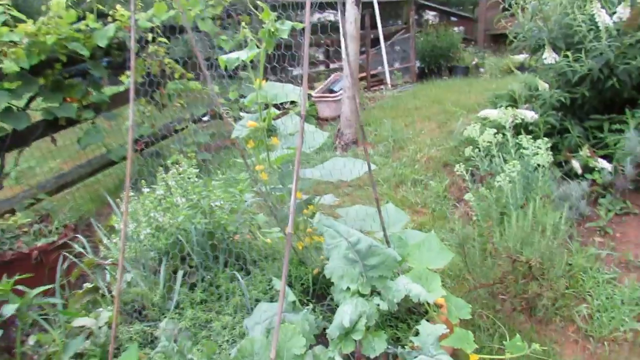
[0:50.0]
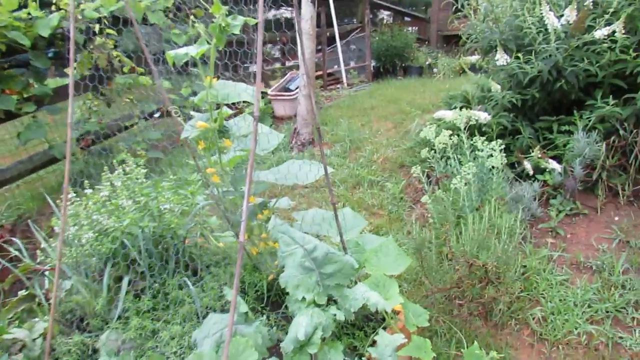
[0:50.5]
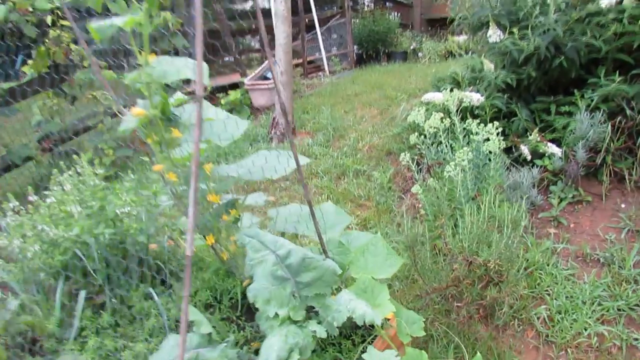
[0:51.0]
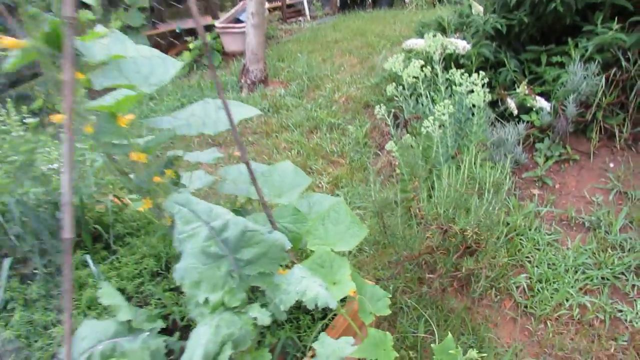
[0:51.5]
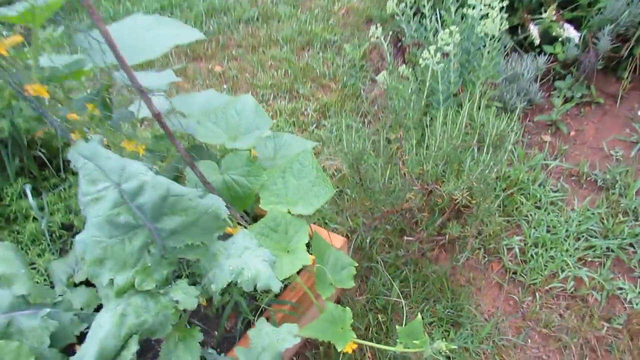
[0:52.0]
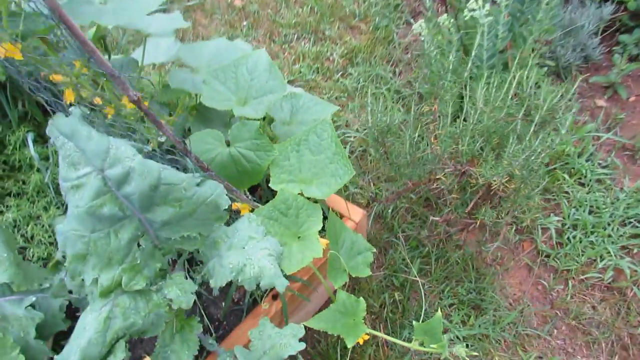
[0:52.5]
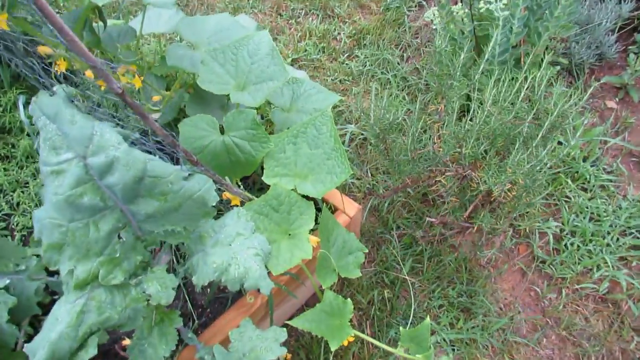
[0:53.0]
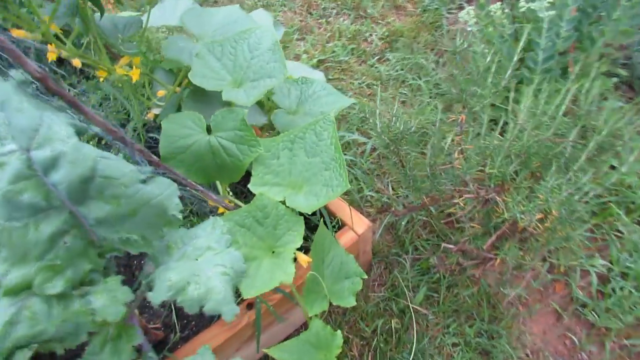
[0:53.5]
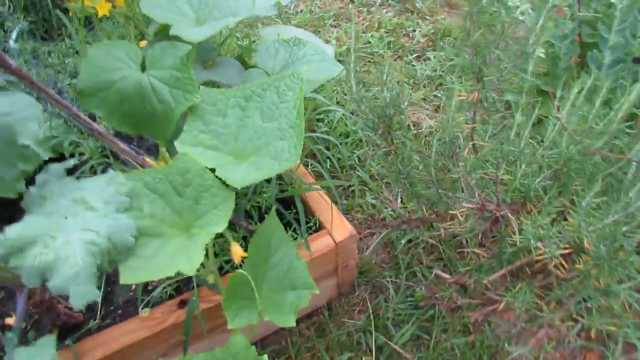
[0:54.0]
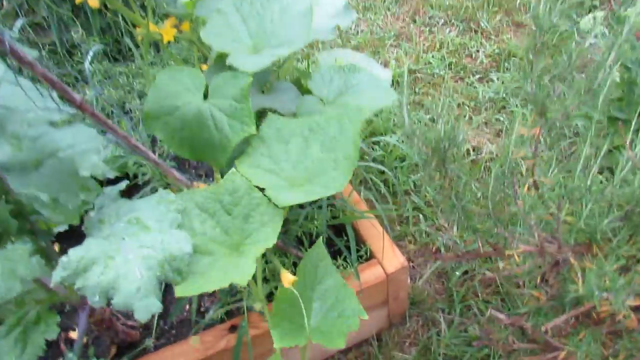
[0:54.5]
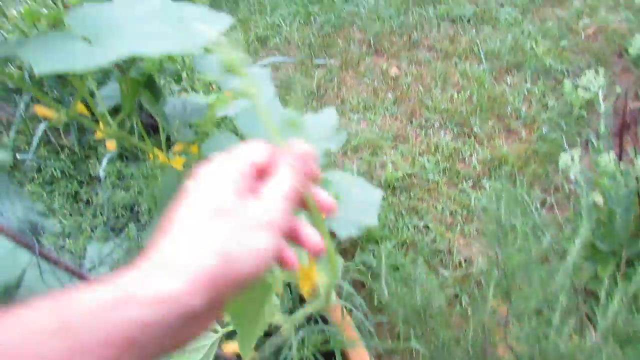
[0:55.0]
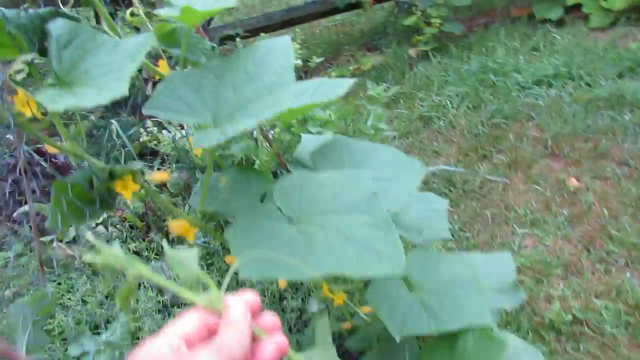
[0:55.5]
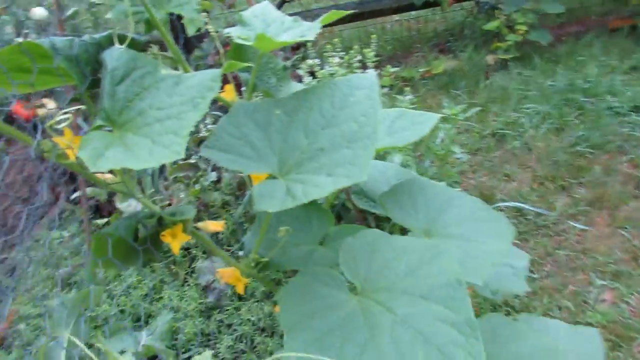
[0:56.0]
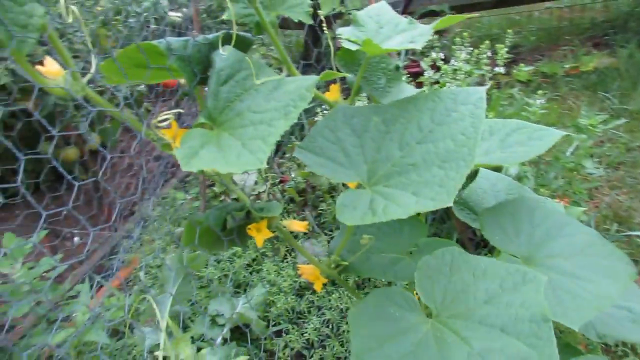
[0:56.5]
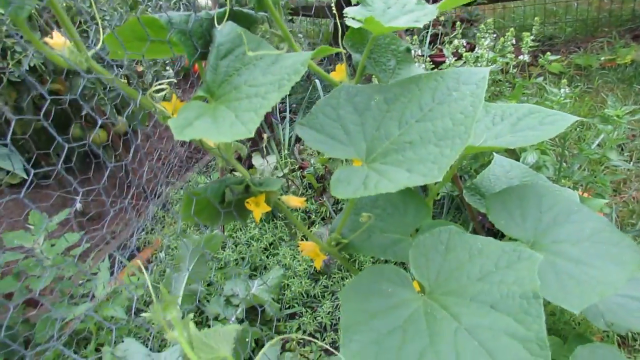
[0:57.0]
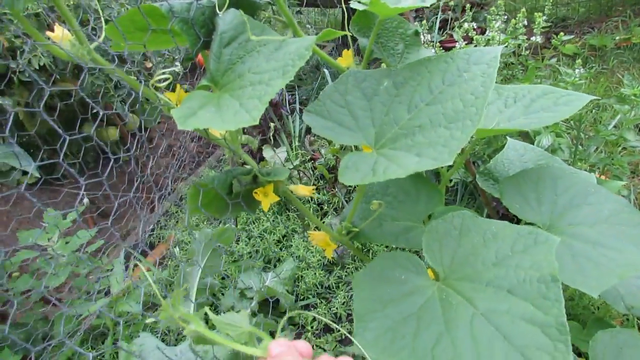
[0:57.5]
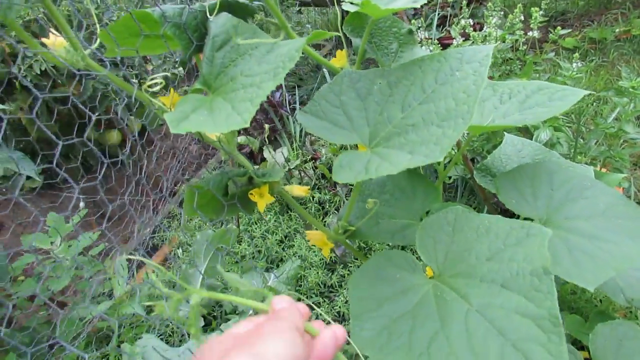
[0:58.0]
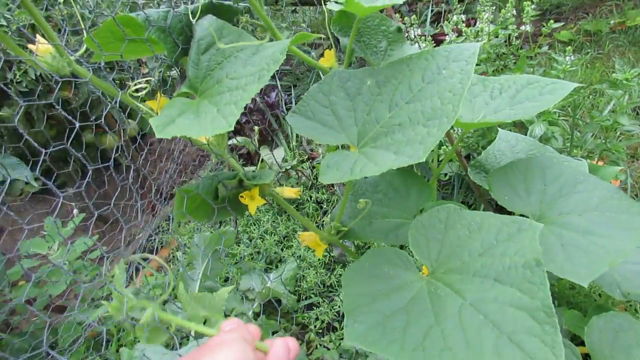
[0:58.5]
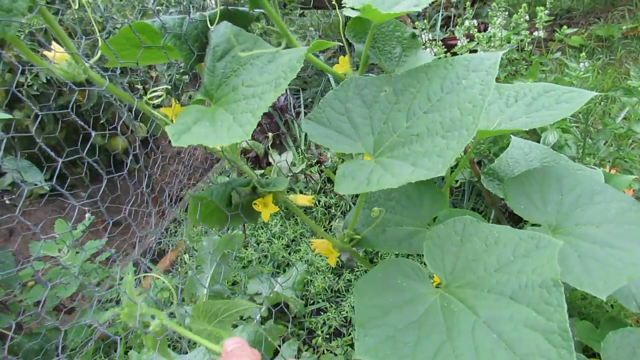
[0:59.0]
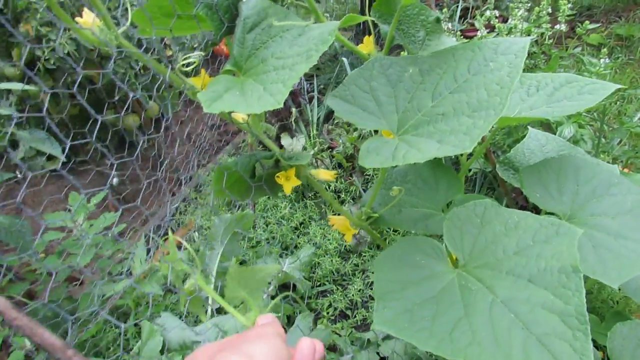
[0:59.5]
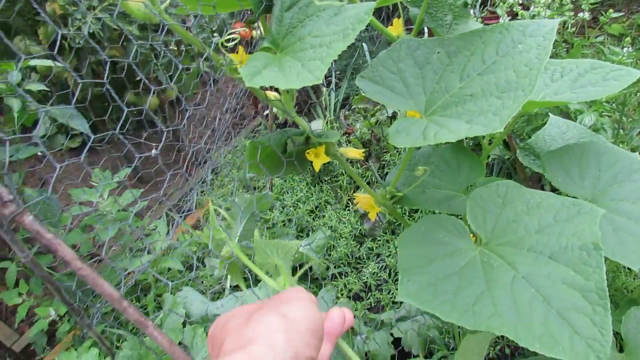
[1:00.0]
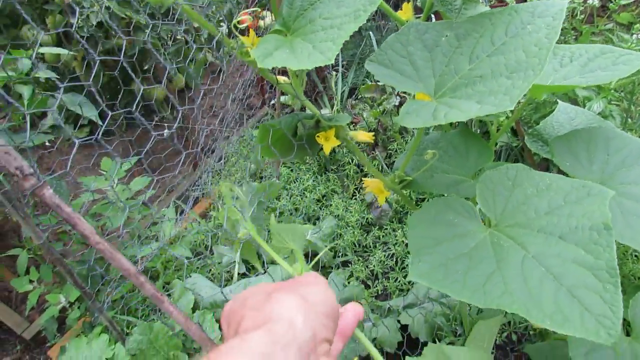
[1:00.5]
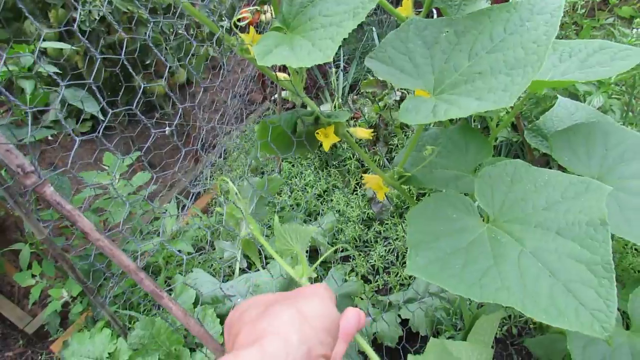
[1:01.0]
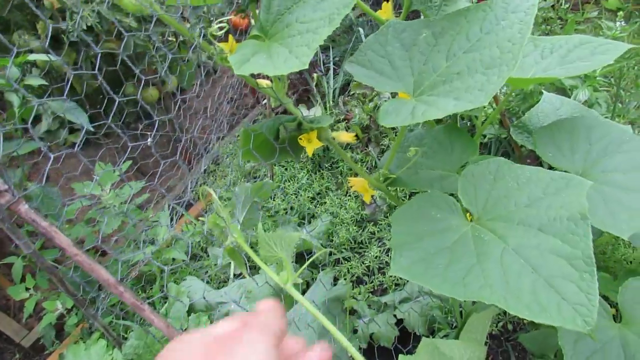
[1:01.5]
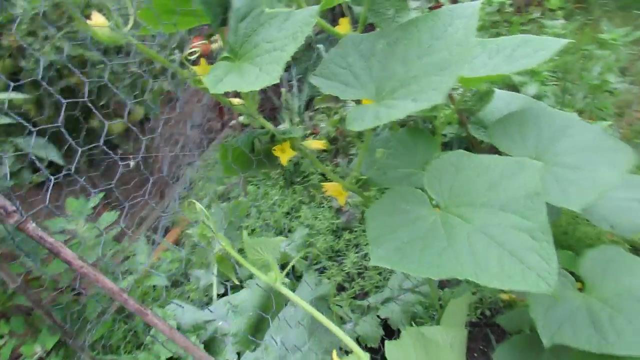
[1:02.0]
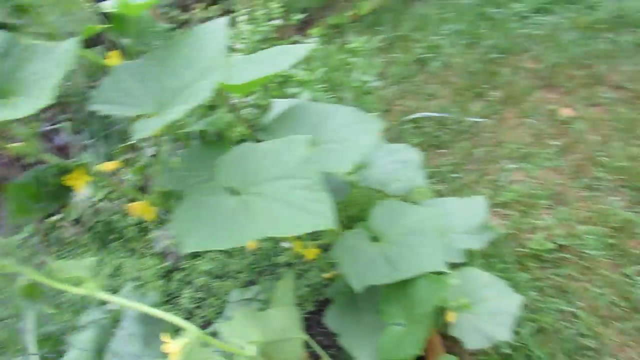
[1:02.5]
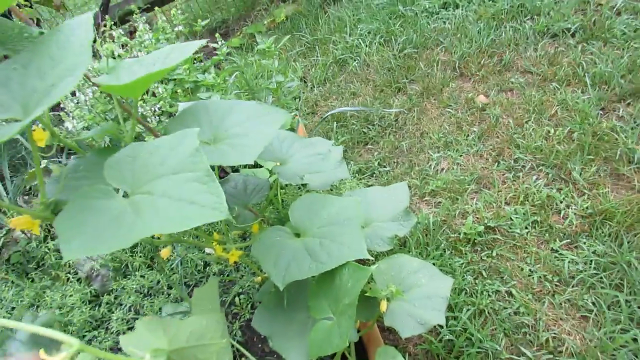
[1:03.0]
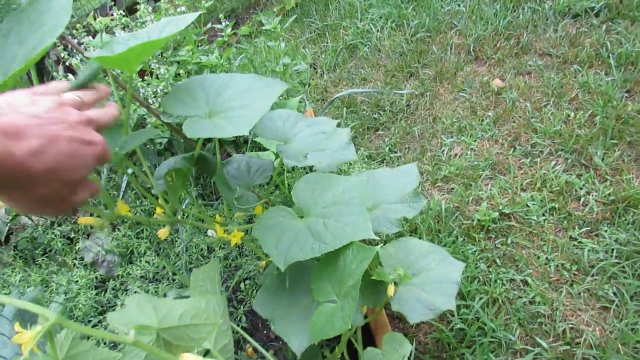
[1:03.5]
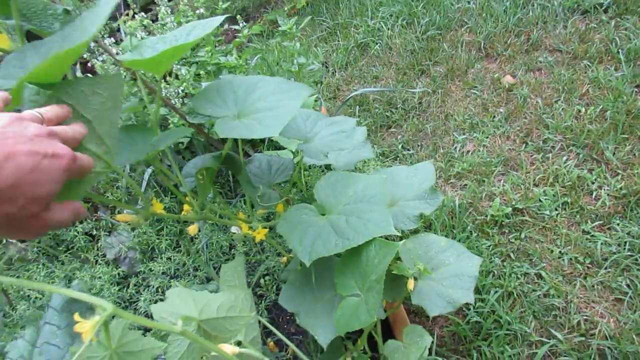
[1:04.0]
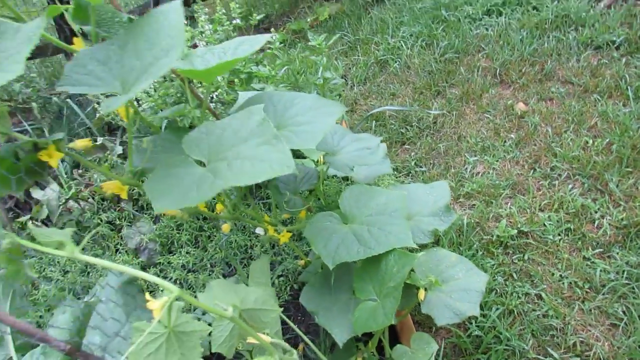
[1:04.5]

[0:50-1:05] The camera pans forward to the planter box to the side of the main plant. A person's hand, apparently the left hand, moves some of the leaves aside and takes some of the stems, fixing them into the holes of the chicken wire that goes up to create upward growth of the plant. There are lots of small yellow flowers, foliage and green leaves, and many other growing plants in the background suggest a garden. The planter box is a light wood, possibly cedar. The plant has two main stalks growing upwards, plus some kind of stem also growing upwards that looks to be in the stages of growth.